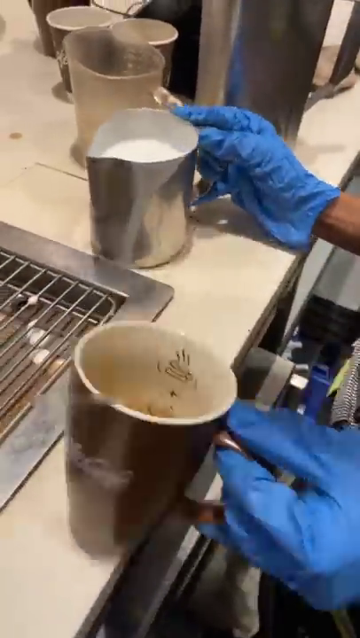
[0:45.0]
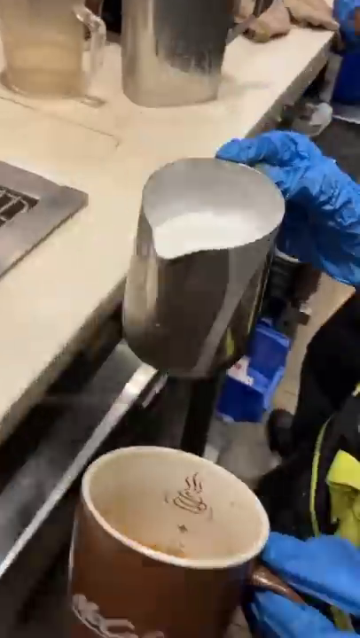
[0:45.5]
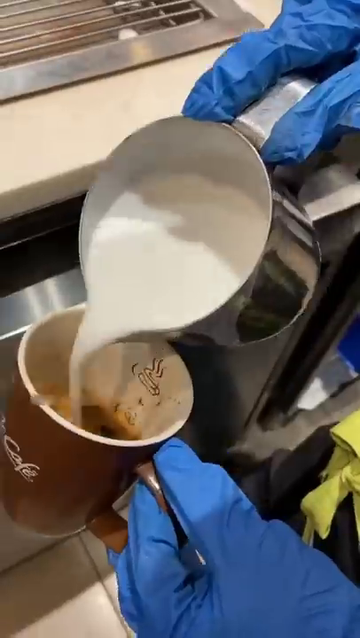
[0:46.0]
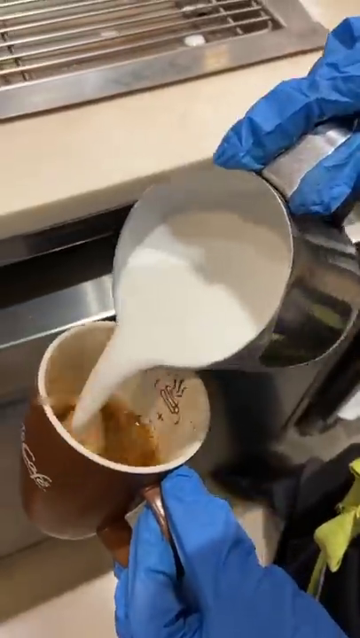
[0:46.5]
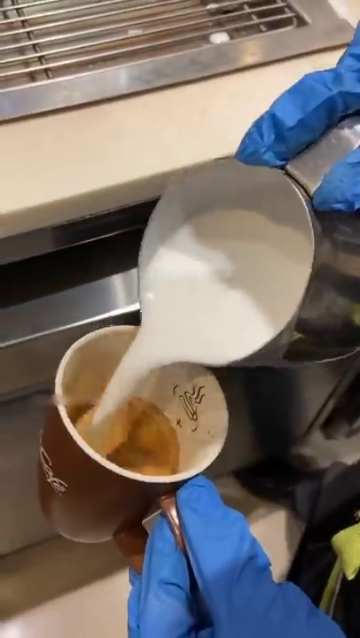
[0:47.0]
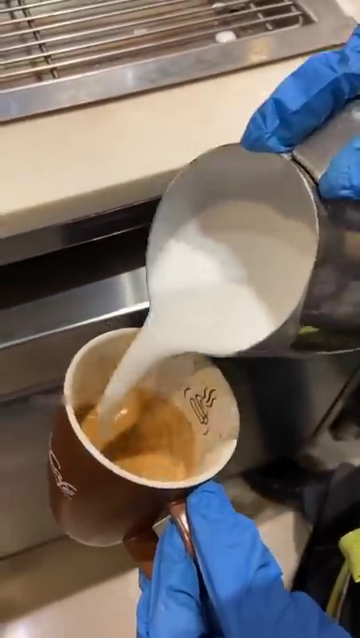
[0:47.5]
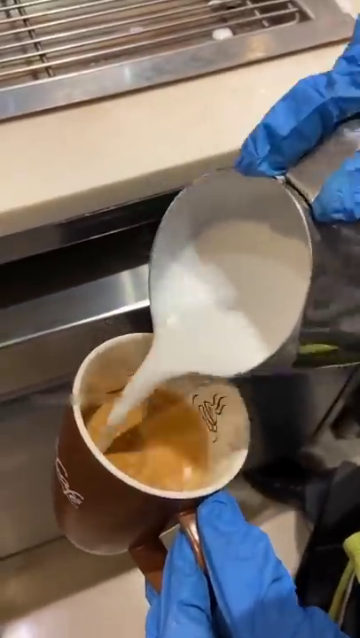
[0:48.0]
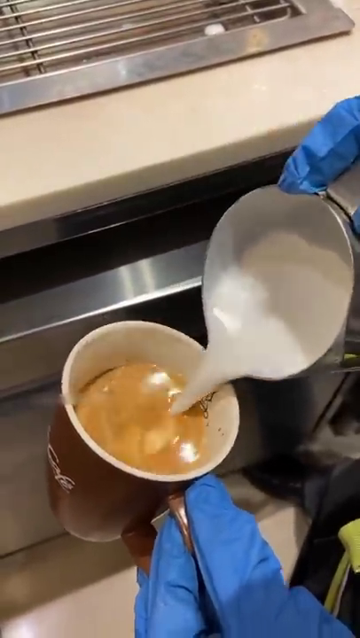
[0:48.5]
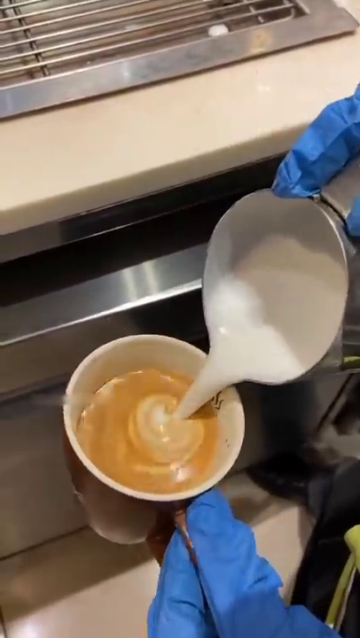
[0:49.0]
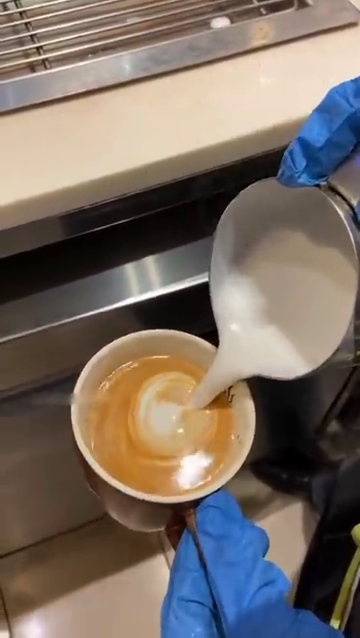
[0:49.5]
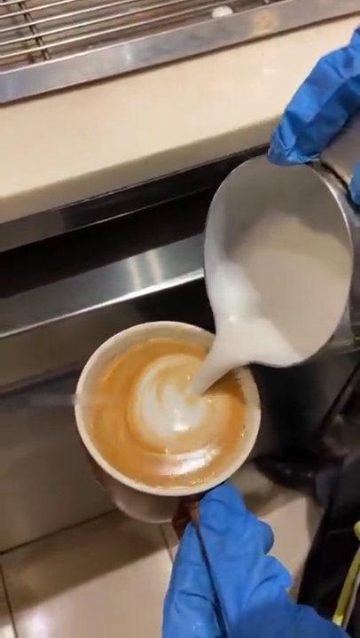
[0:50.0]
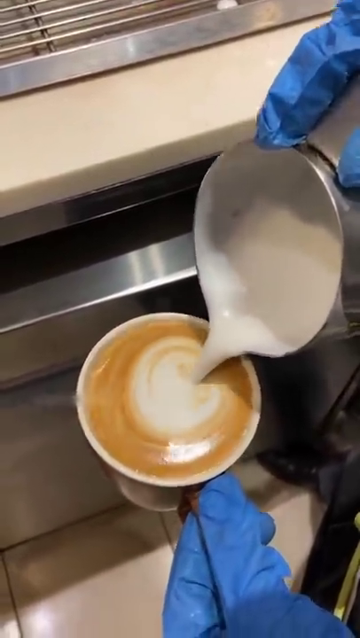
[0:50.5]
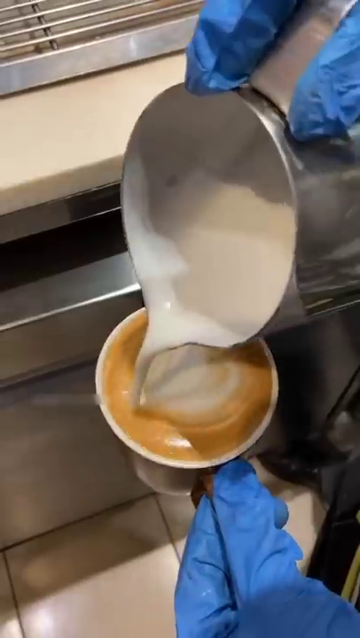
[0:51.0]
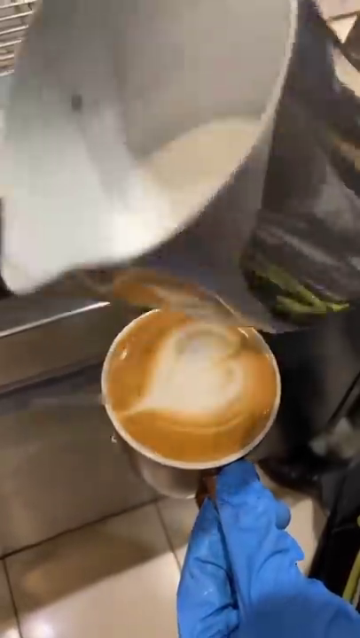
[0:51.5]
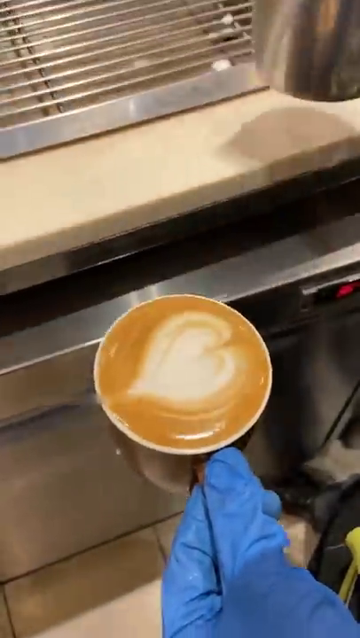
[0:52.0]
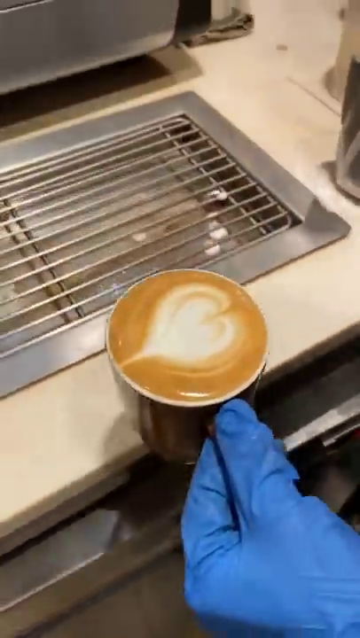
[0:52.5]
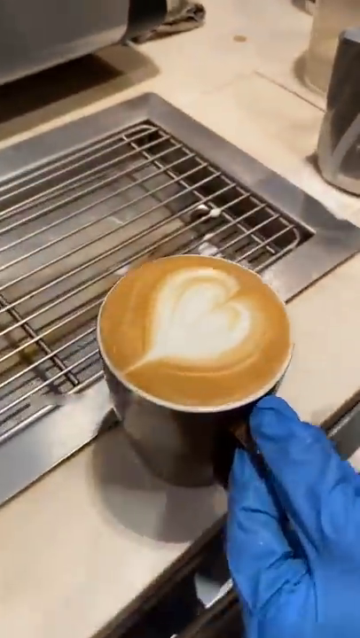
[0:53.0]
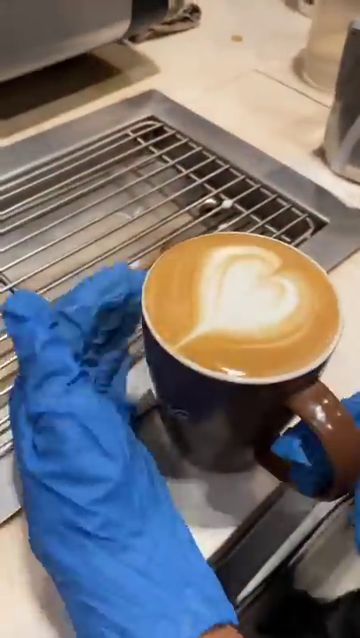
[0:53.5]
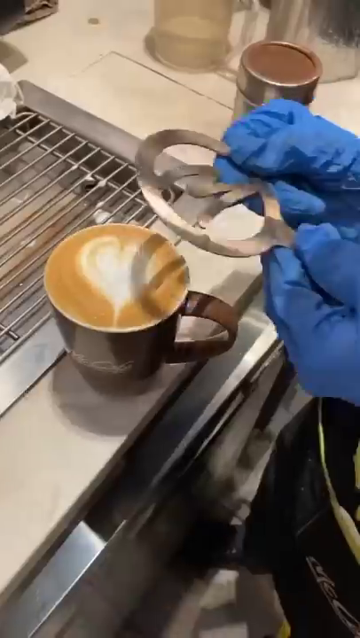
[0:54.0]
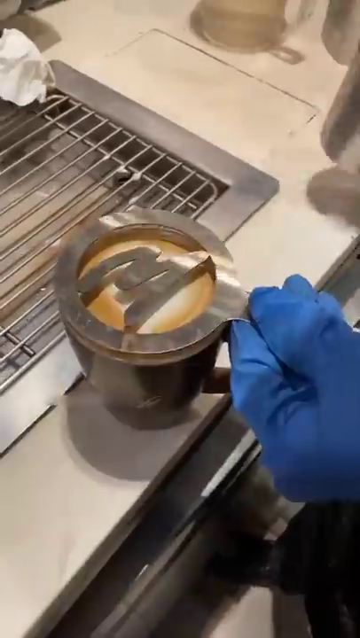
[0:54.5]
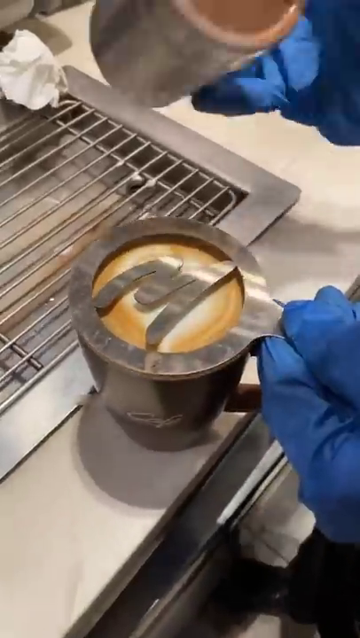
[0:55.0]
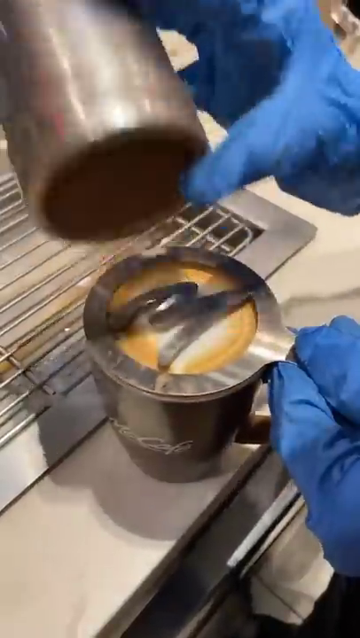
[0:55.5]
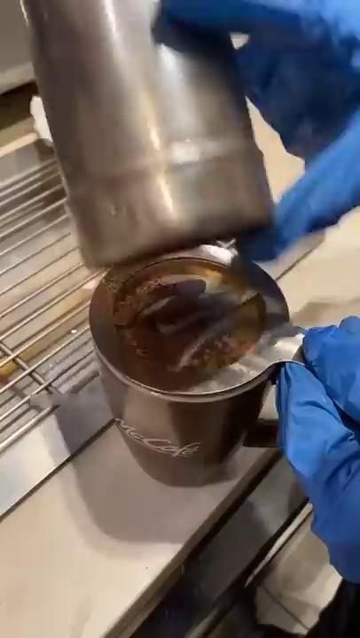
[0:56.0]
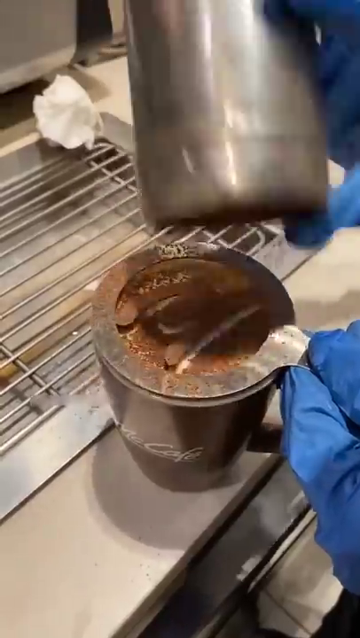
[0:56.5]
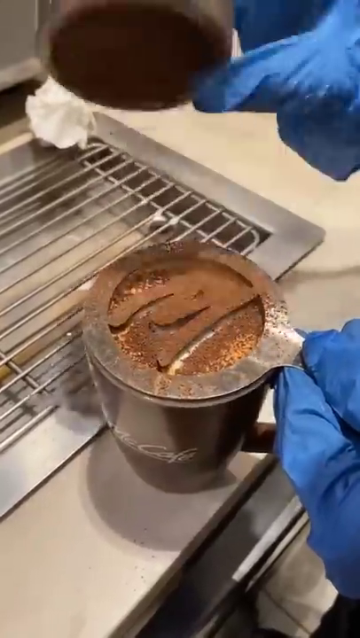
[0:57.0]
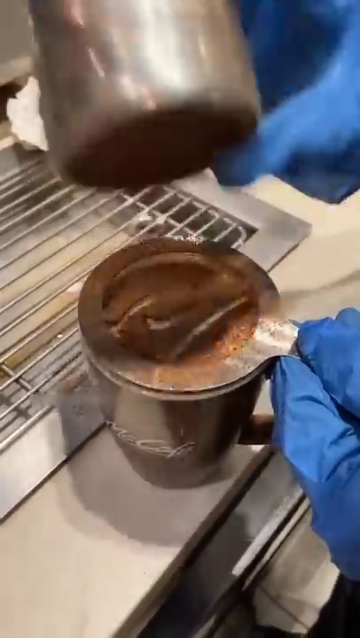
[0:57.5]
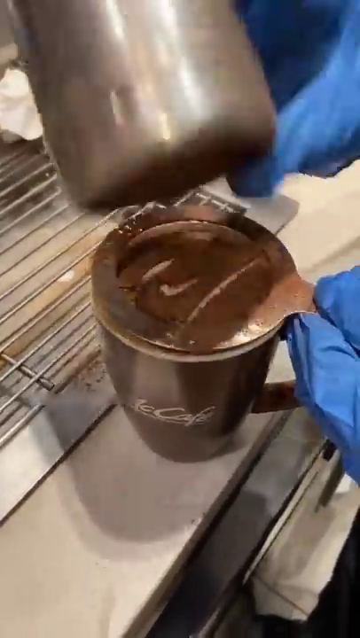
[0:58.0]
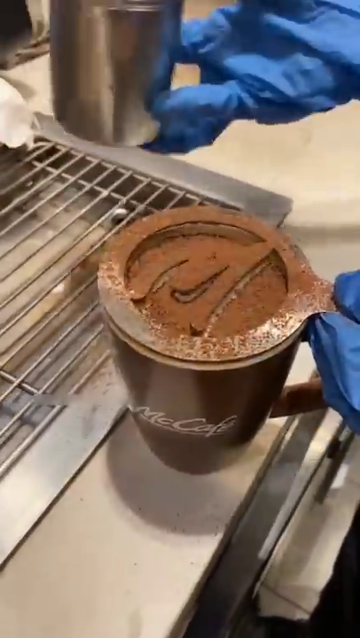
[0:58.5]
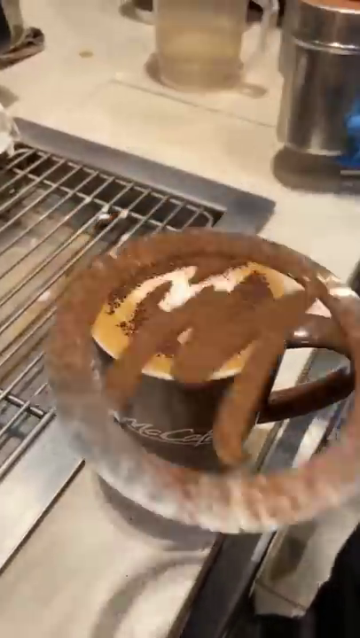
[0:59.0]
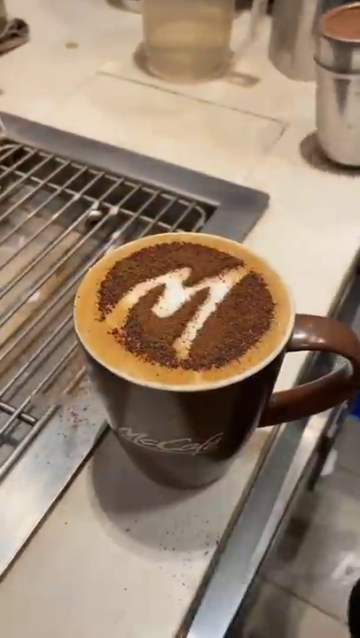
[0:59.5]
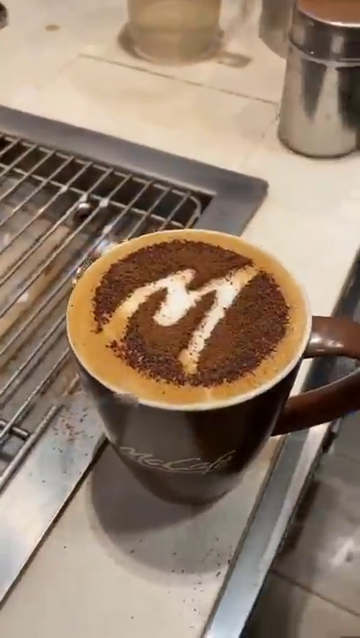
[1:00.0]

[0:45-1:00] In an industrial or restaurant kitchen, a person wearing blue latex gloves, otherwise not seen, holds the handle of a brown mug in their left hand and the handle of a small silver pitcher in their right hand. They pour a stream of milk or cream into the mug, which has "McCafe" written on the side in white lettering, swirling the milk as they pour. It makes a shape on top of the coffee that looks similar to a heart. They pick up a silver stencil and vigorously shake what appears to be cocoa powder around it. When they pull the stencil away, a circle shape is left on top of the coffee, and where the stencil was there is a letter M, presumably standing for McCafe.